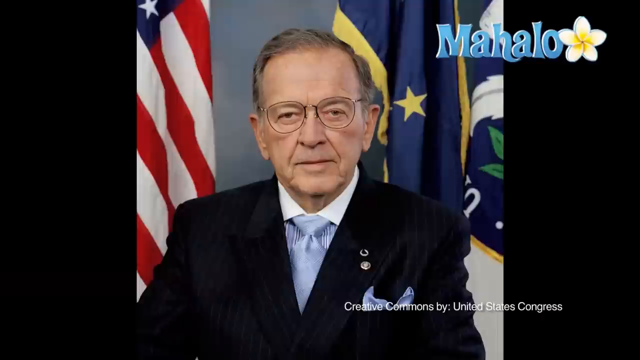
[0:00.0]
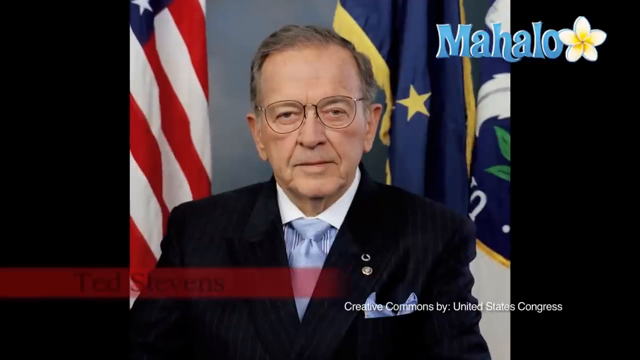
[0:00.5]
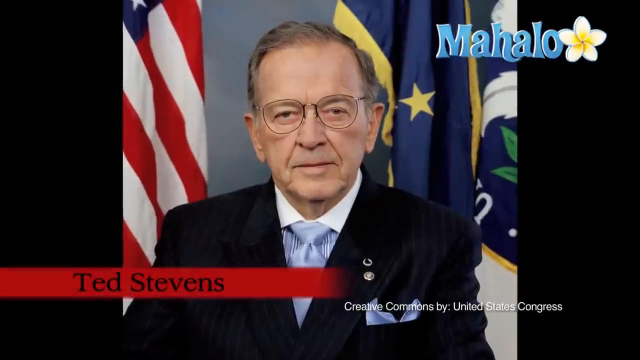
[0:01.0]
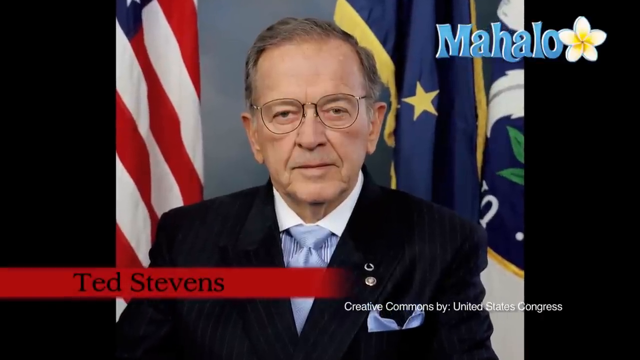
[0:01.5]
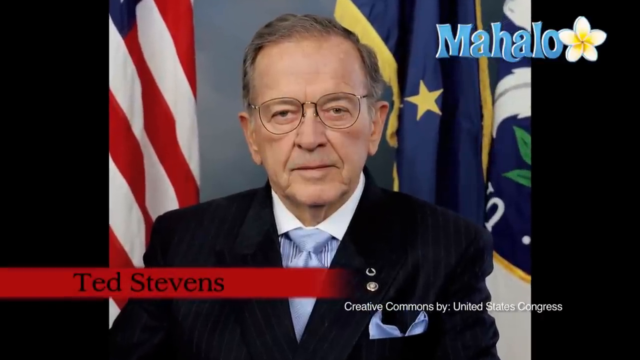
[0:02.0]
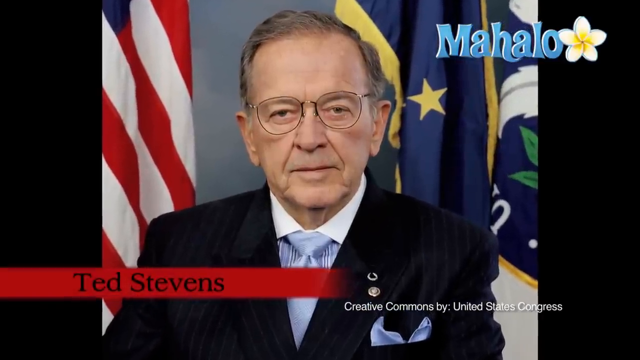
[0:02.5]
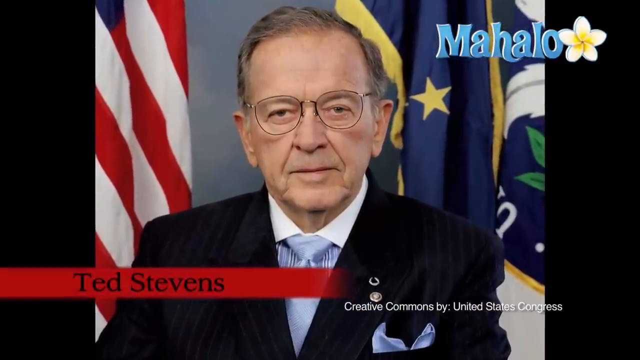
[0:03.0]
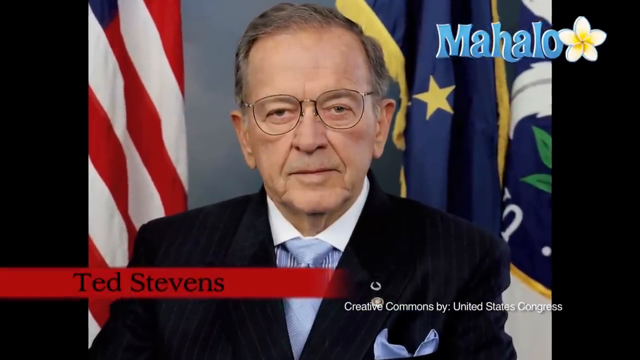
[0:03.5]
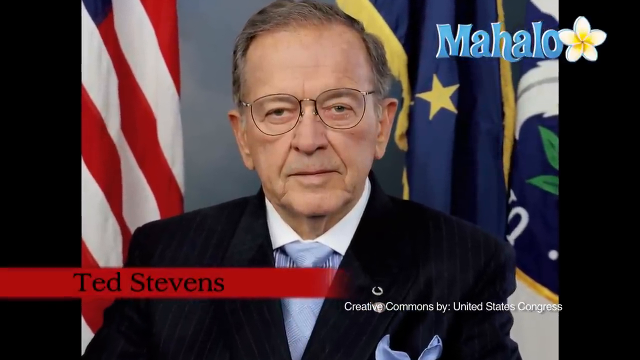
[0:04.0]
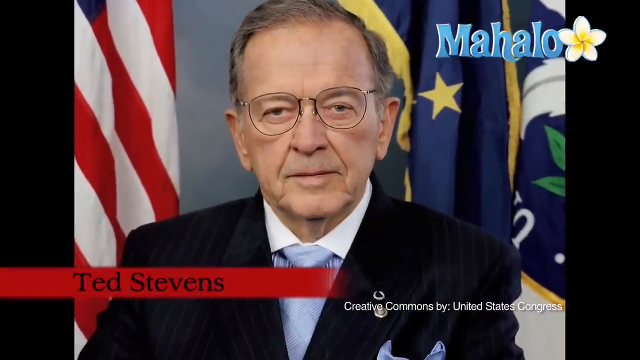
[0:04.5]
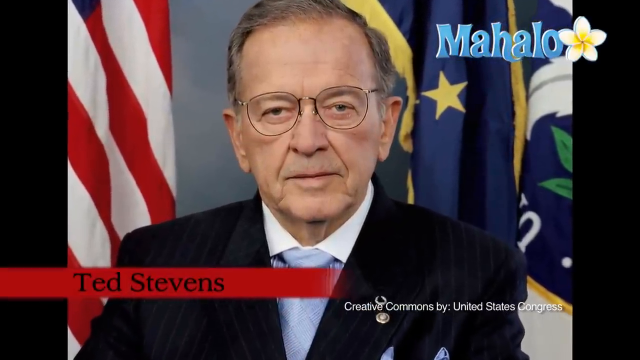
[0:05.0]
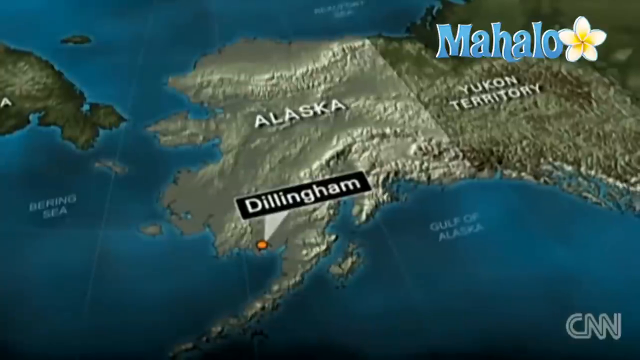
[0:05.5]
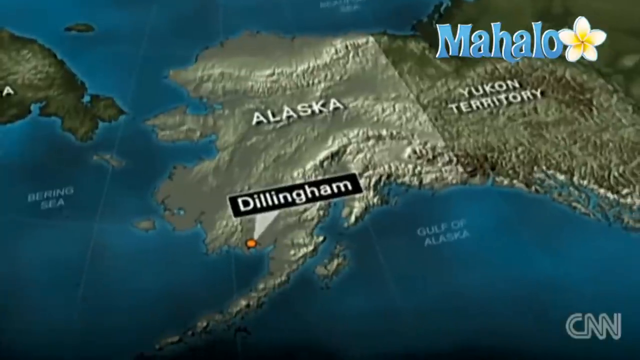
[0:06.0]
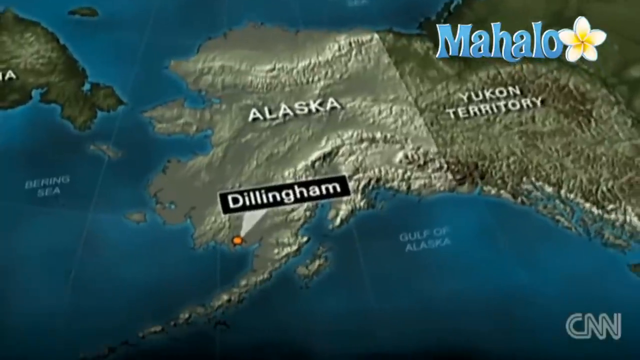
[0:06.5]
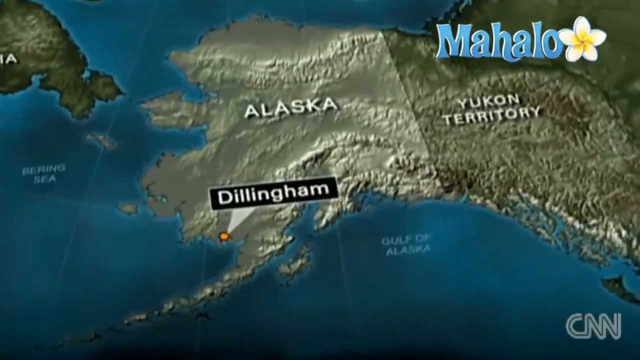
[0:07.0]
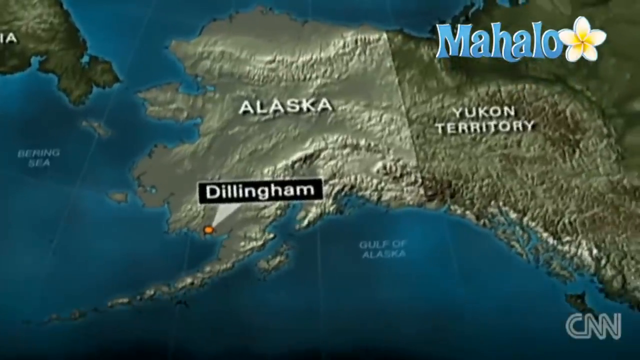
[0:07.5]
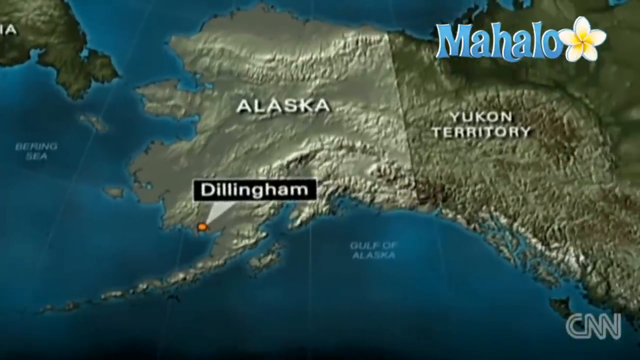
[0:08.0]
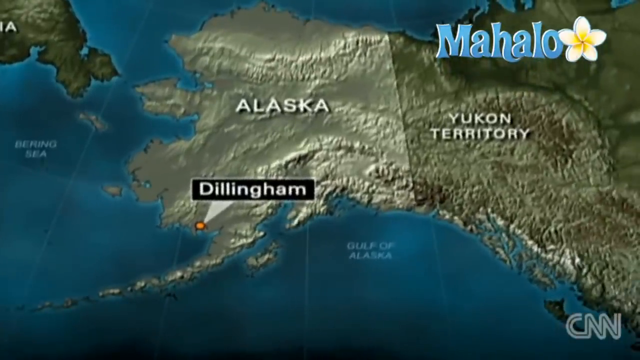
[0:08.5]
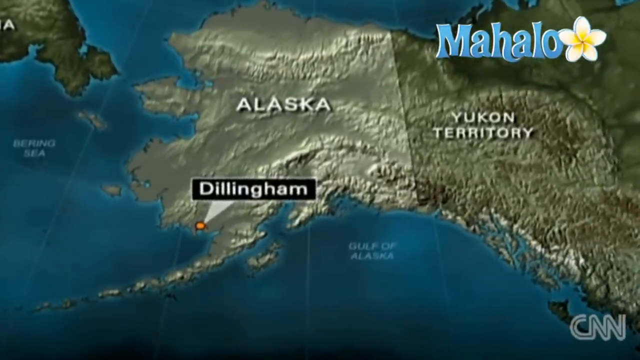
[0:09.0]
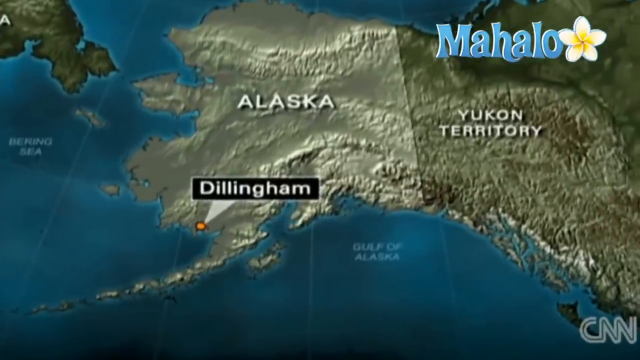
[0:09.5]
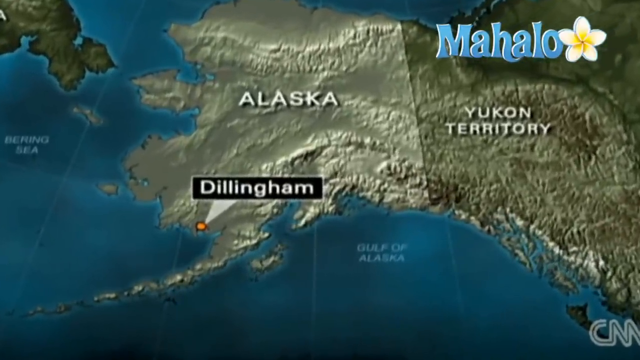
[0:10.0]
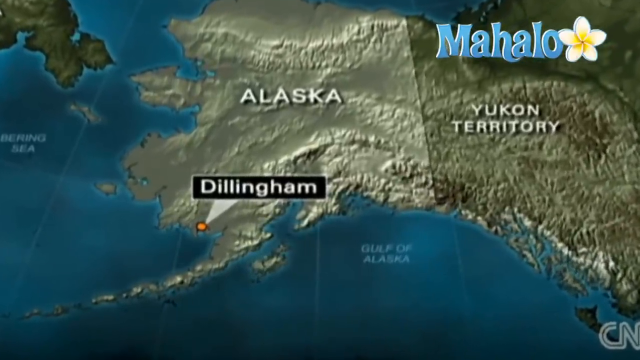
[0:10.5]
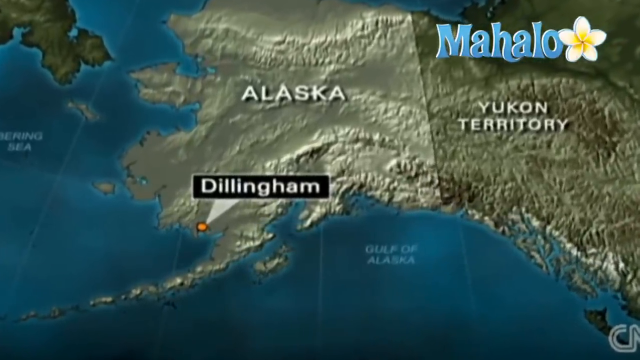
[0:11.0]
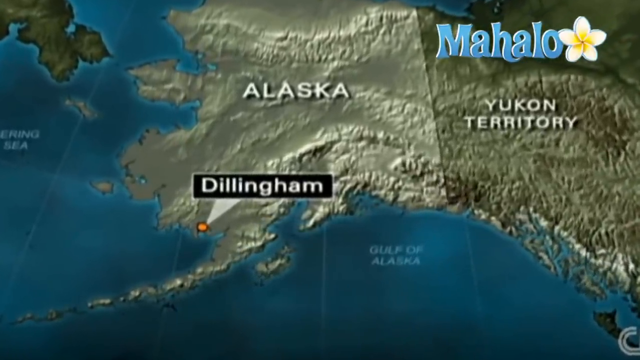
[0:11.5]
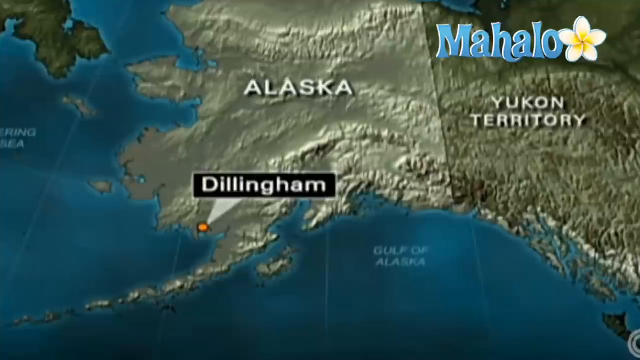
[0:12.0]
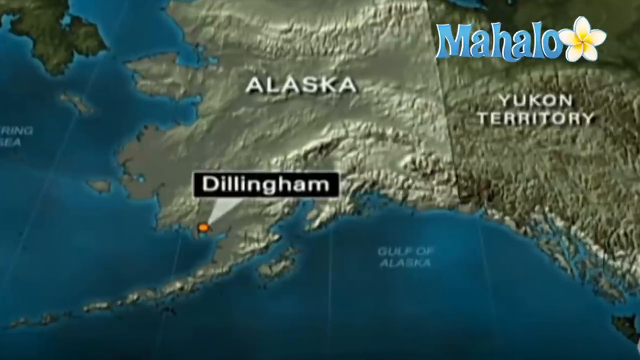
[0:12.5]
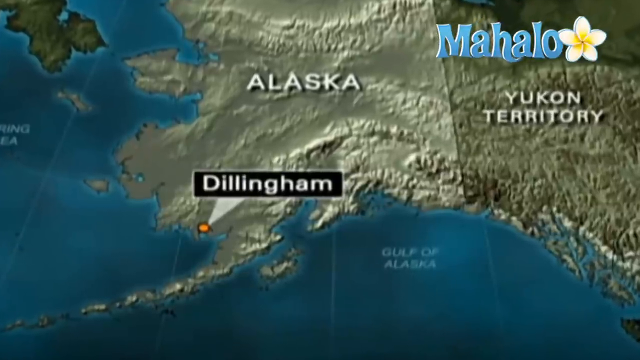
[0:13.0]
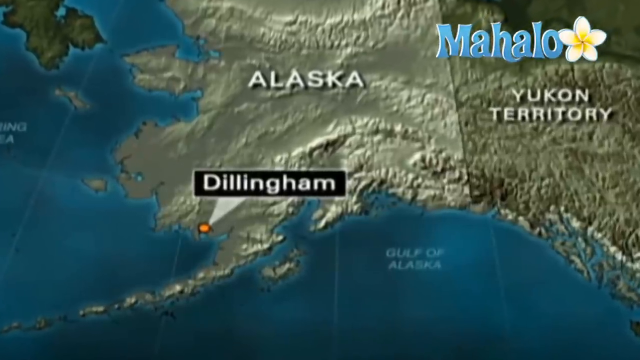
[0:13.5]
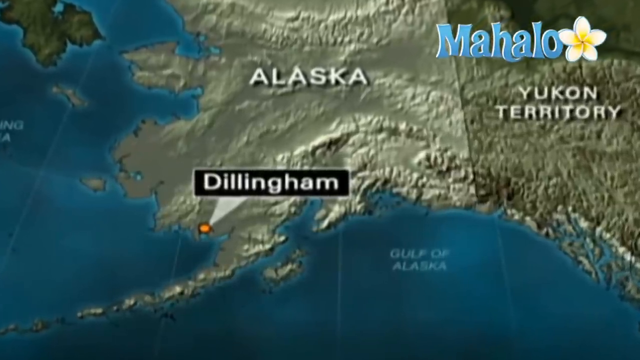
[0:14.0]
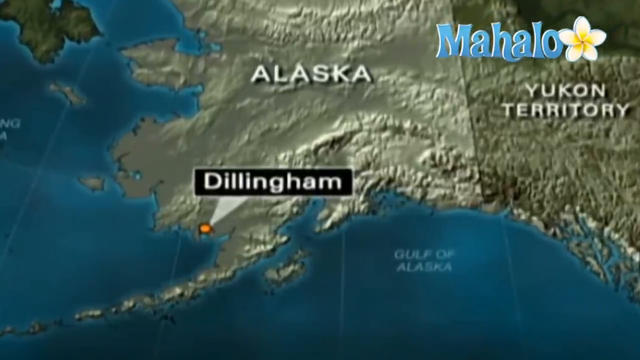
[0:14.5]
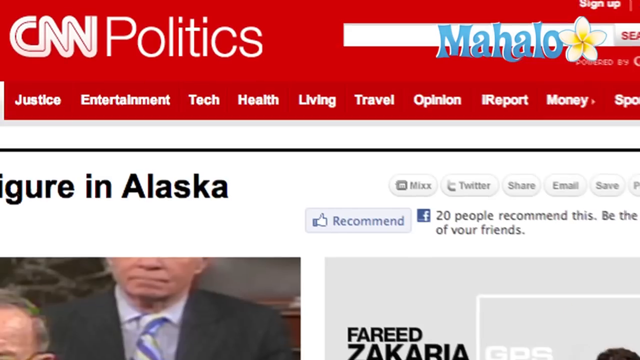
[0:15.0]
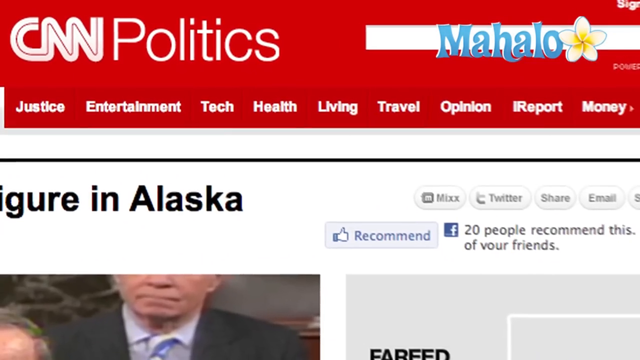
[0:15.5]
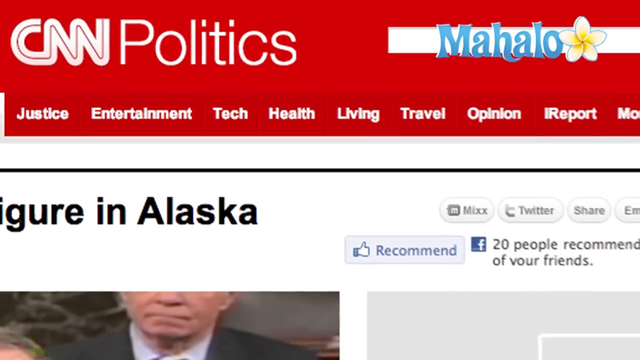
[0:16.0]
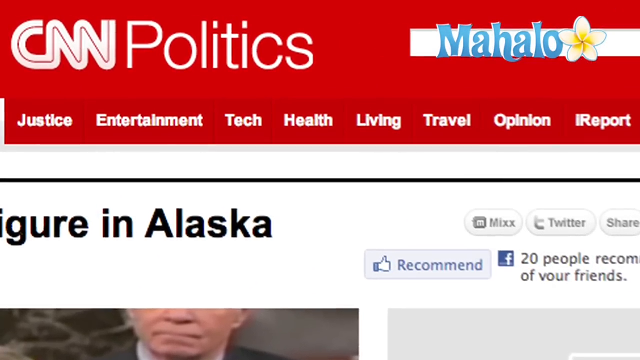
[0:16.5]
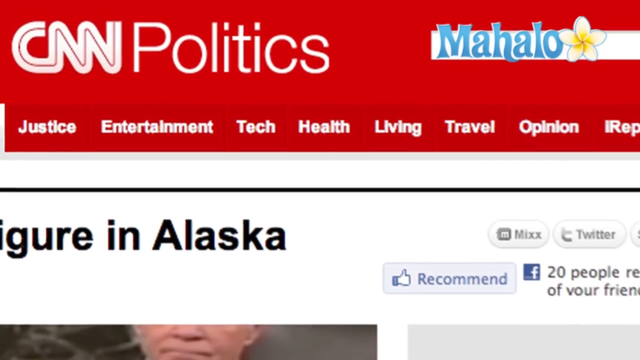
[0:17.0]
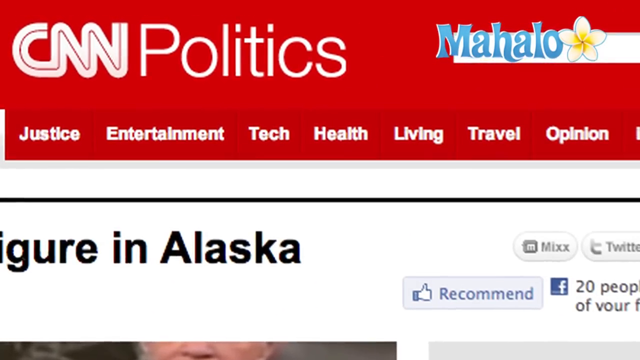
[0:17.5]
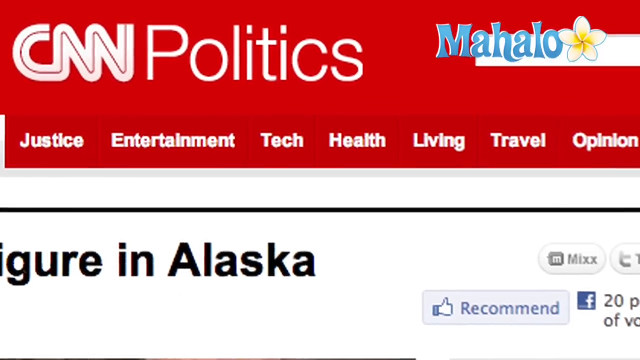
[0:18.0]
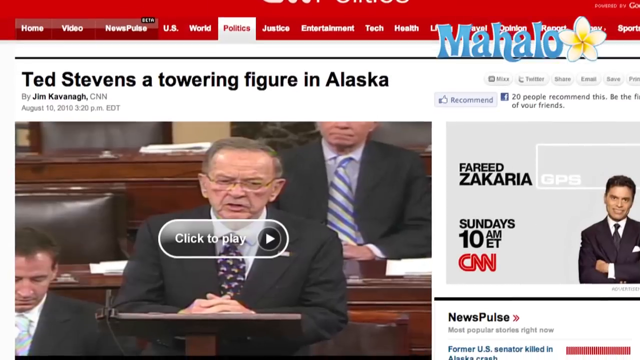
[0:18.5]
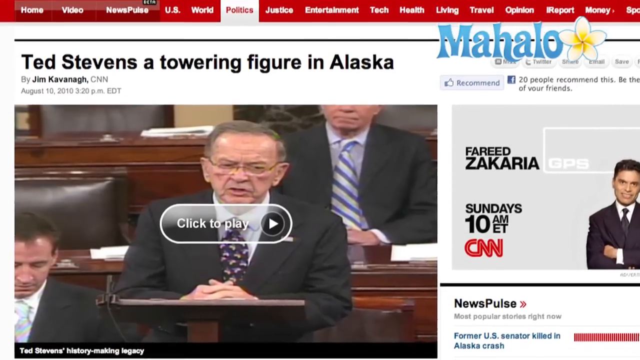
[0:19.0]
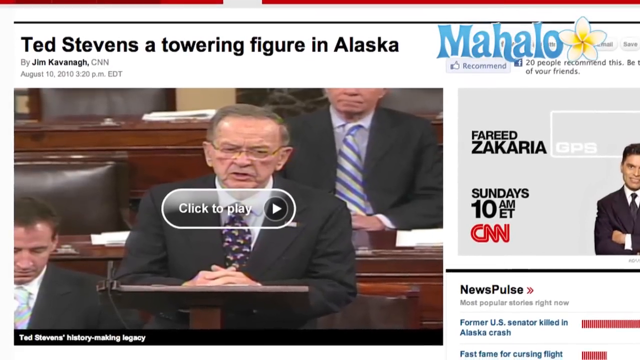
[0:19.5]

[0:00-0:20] An older white man, formally dressed in a black suit, is seated and flanked by two flags behind him: the flag of the United States of America and the state flag of Alaska. A caption under the screen reads "Ted Stevens", suggesting the man is Ted Stevens. A satellite image of part of the United States follows, showing the state of Alaska and parts of the Yukon Territory; of particular importance seems to be Dillingham, a coastal town in Alaska that is close to the Gulf of Alaska. Next comes a CNN politics webpage that seems well laid out and easy to navigate, and then an article that reads "Ted Stevens, a towering figure in Alaska", a news post by Jim Carverner of CNN dated 10 October 2010.